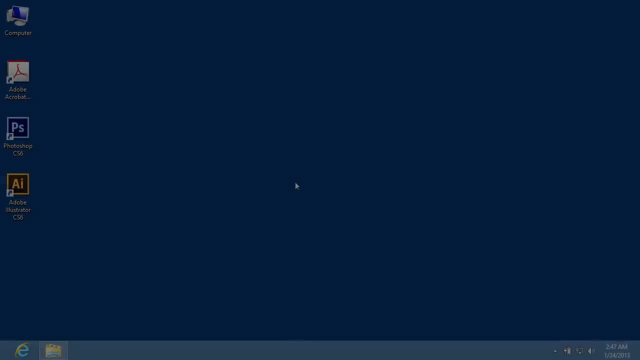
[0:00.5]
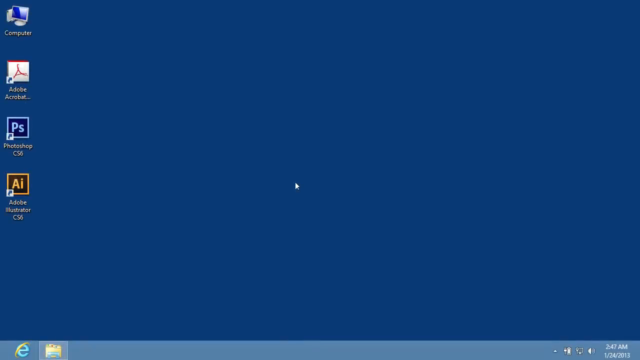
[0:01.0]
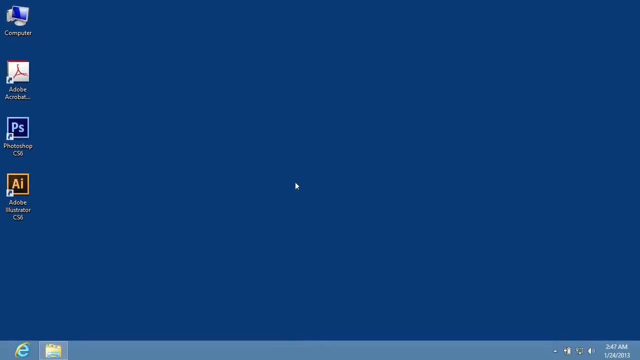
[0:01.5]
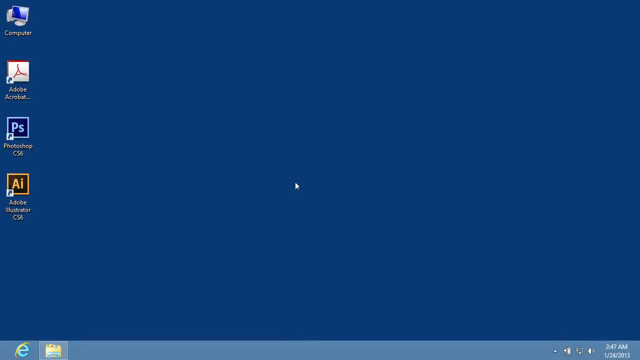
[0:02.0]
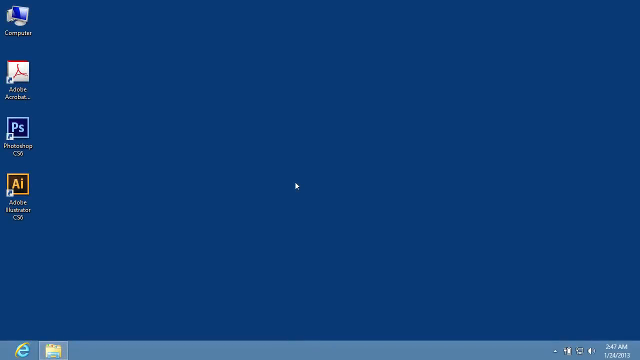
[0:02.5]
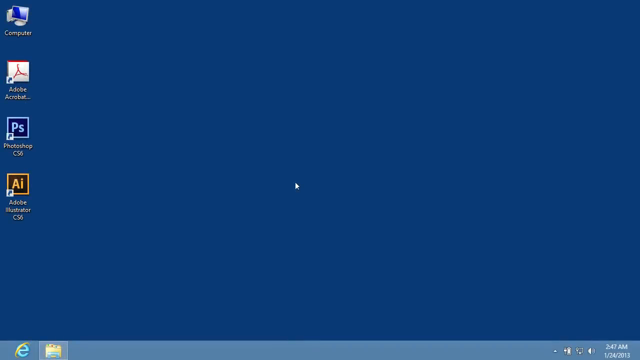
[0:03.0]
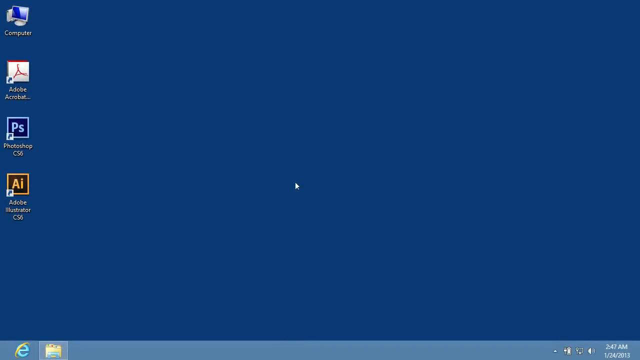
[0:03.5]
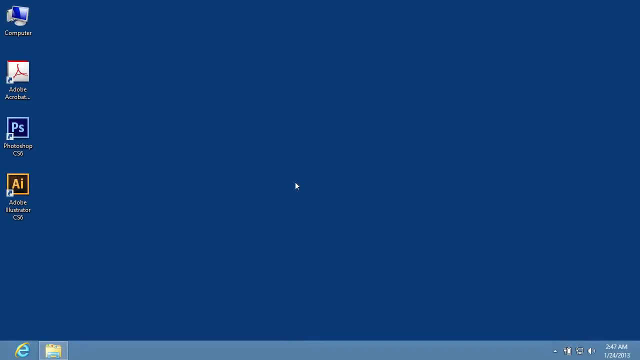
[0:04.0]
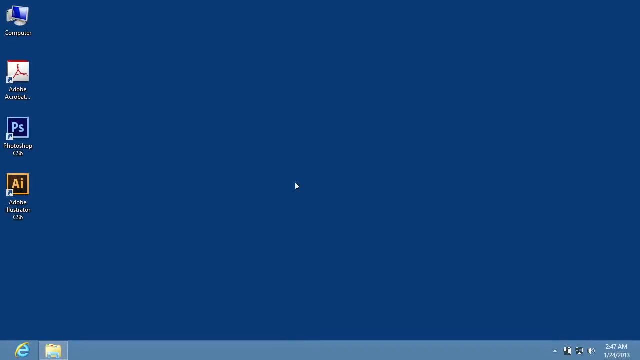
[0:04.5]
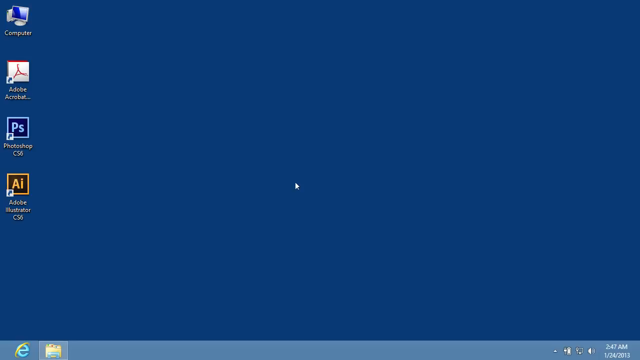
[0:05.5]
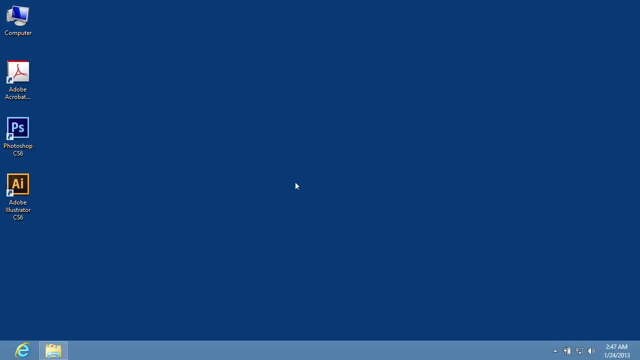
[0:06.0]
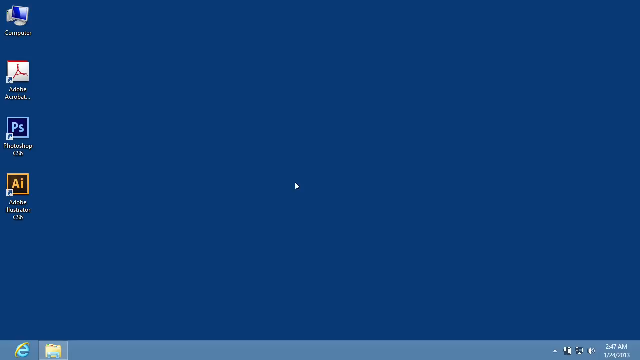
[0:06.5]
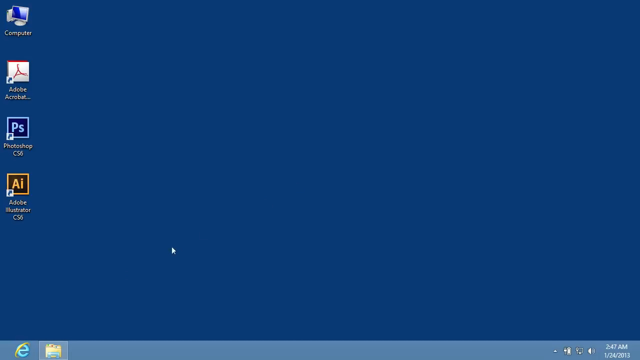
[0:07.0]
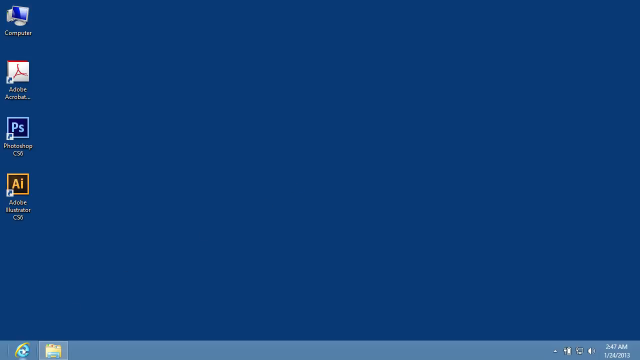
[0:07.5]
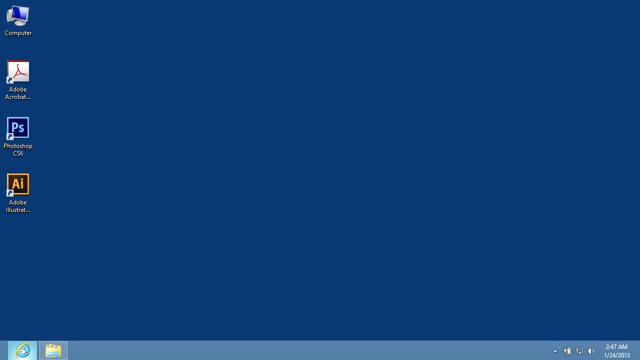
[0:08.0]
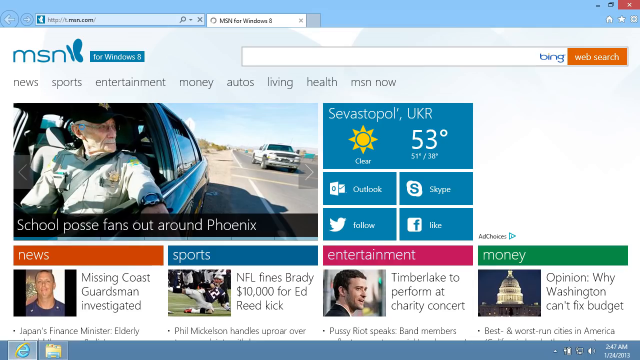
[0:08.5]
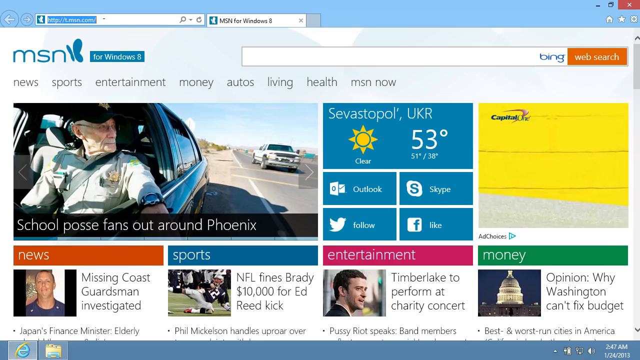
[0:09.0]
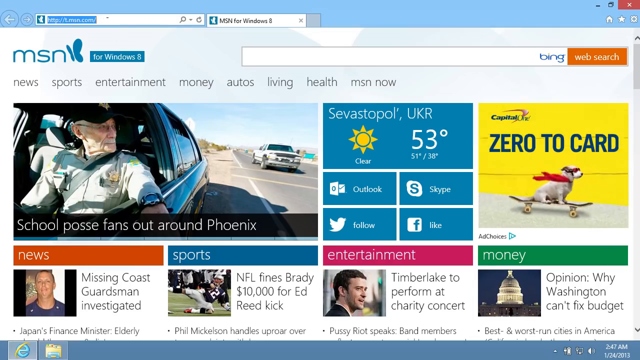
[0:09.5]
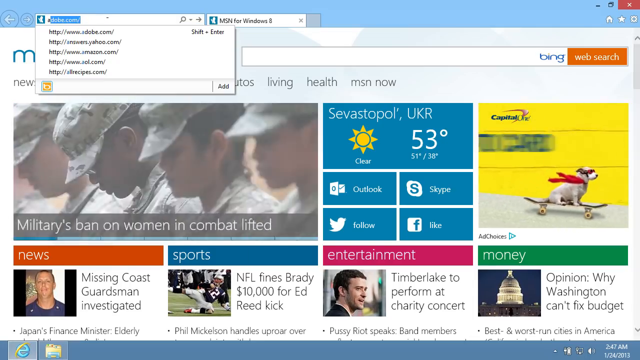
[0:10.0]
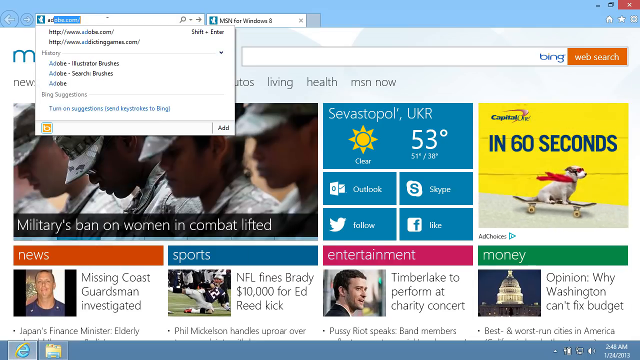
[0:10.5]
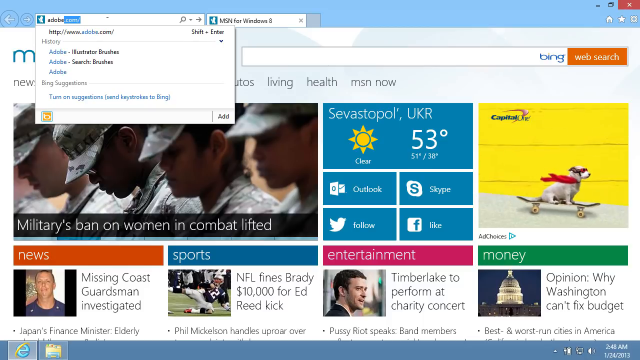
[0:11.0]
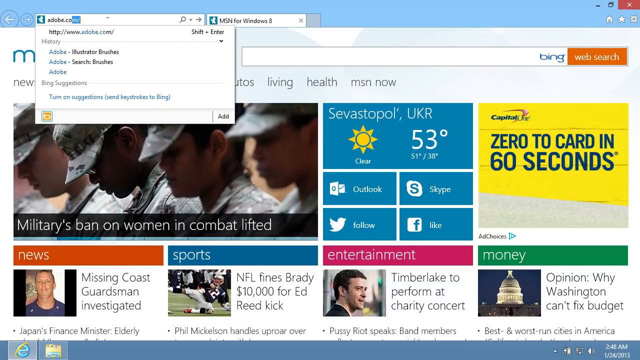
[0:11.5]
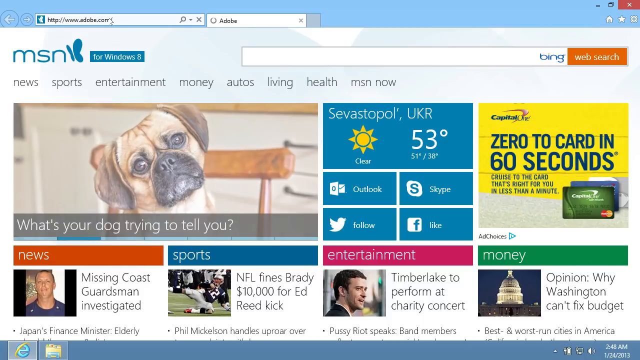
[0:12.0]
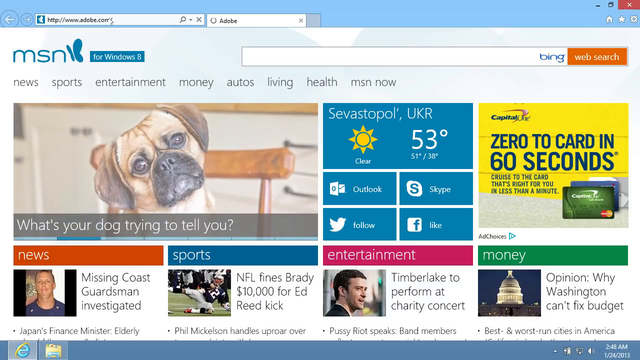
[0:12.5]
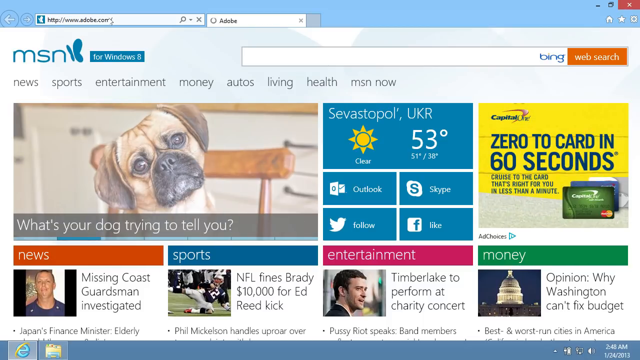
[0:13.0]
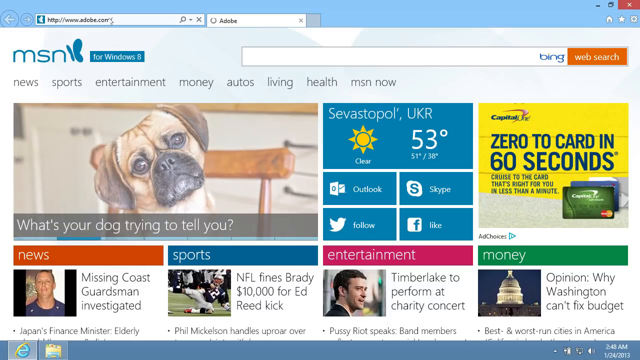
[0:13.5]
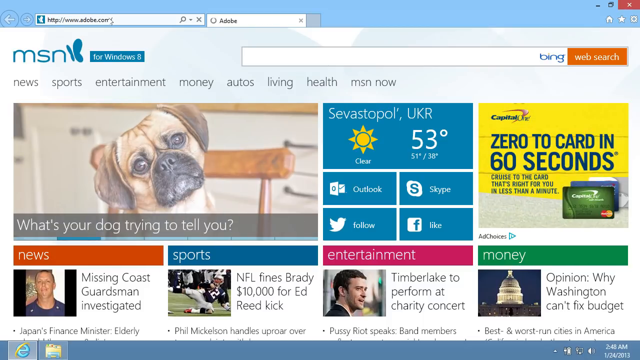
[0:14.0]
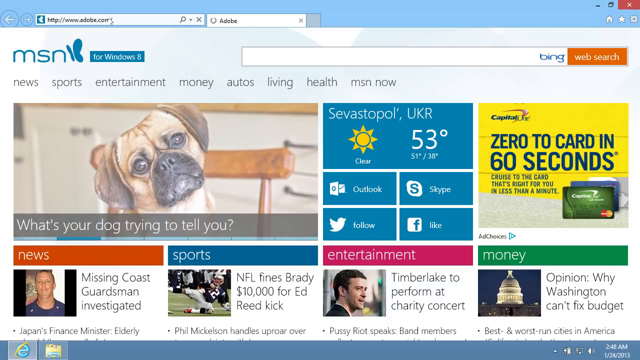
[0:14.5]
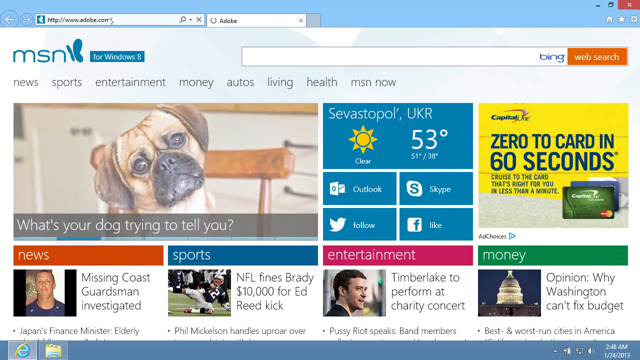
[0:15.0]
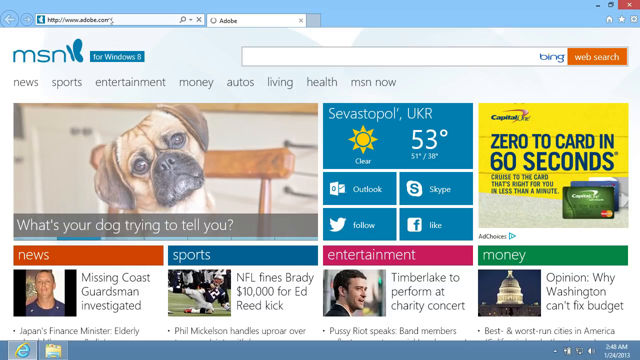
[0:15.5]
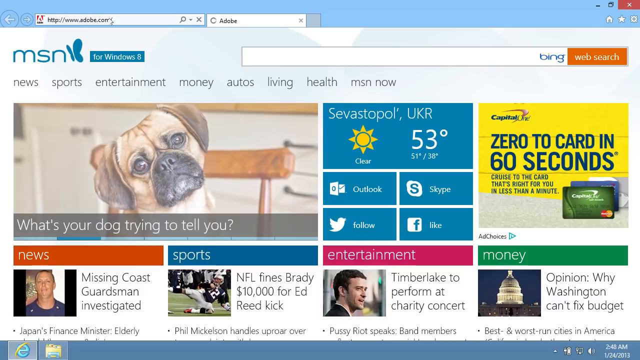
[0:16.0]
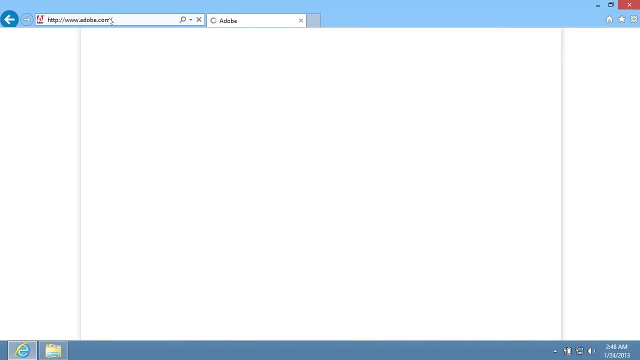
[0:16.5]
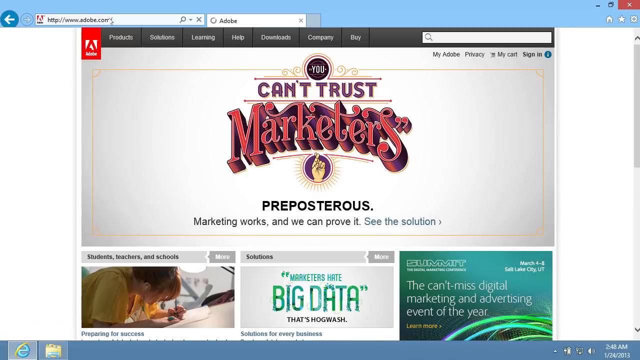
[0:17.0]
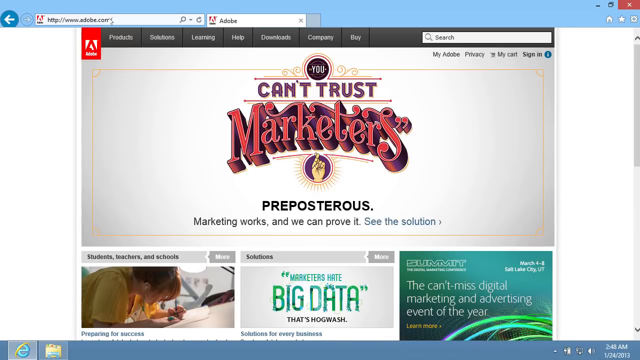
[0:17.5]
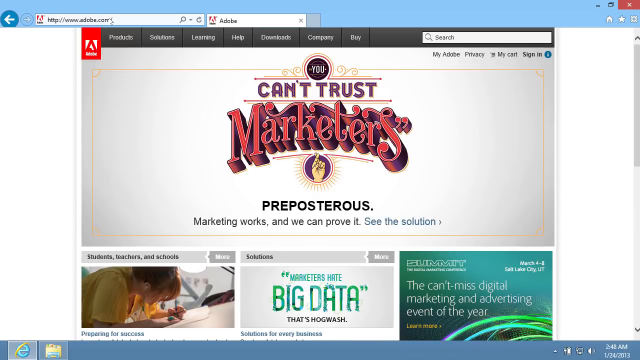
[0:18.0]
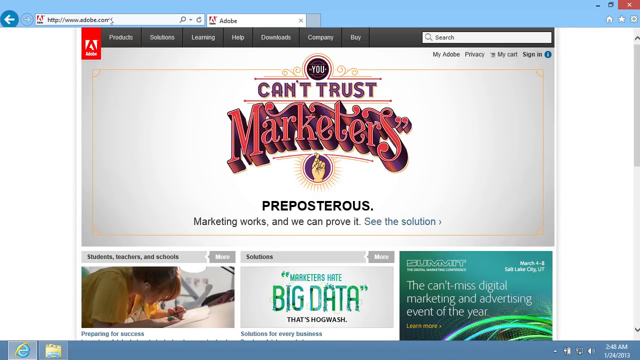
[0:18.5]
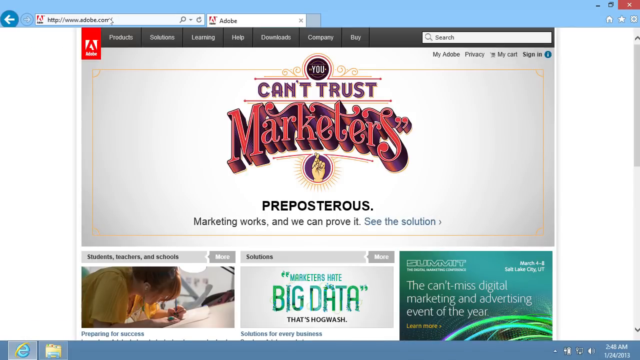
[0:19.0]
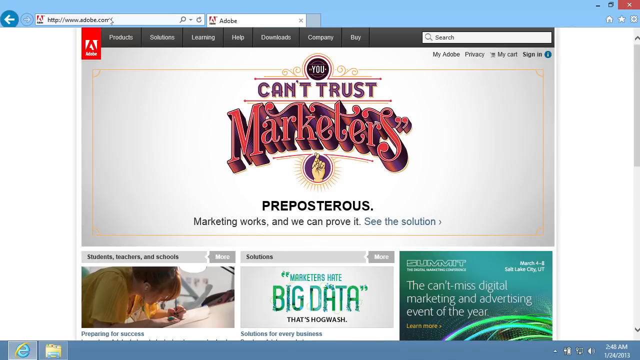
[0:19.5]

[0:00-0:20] The video opens on a computer desktop showing the logos for Photoshop and Illustrator. It then moves to a web browser, where someone types an address into the address bar to go to adobe.com; the mouse pointer moves around the screen. The page loads and shows what looks like a welcome page, then the screen goes black.